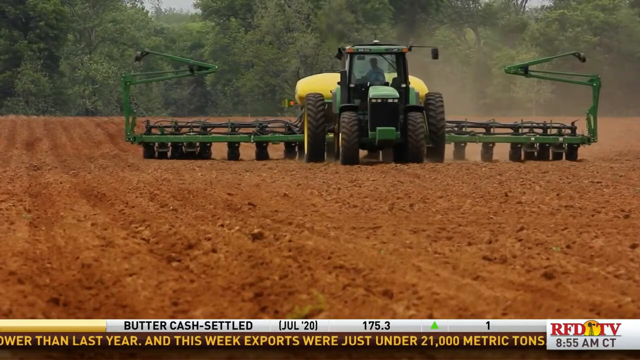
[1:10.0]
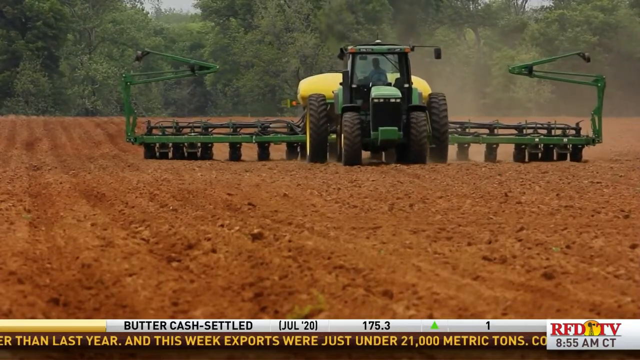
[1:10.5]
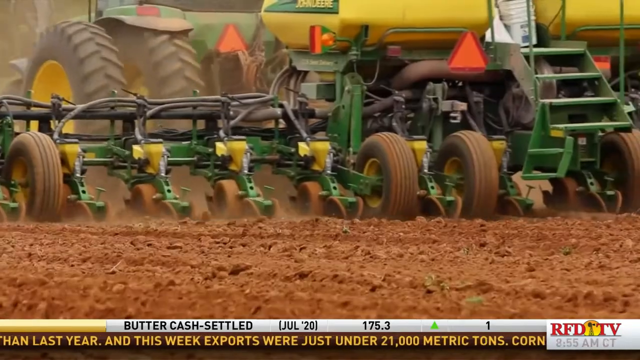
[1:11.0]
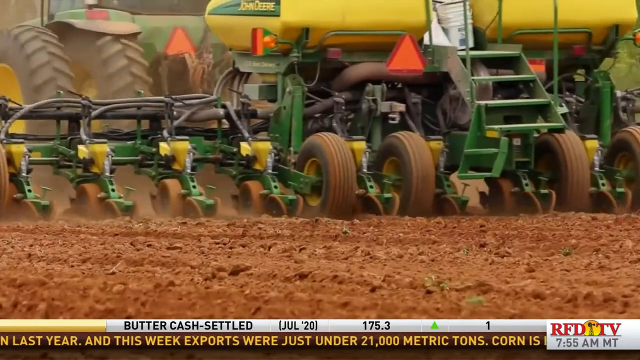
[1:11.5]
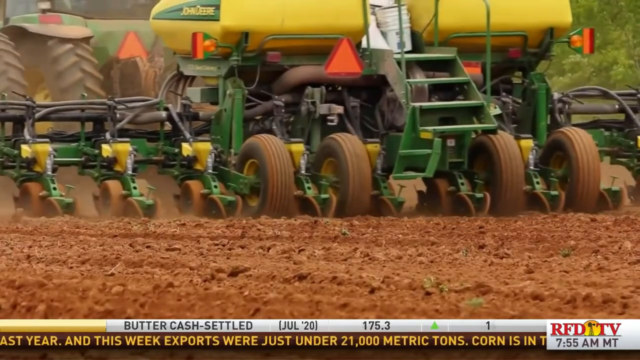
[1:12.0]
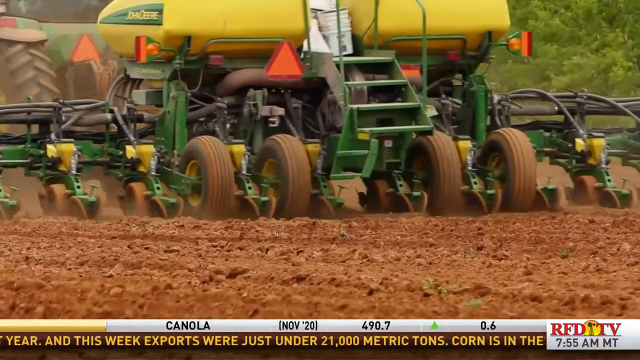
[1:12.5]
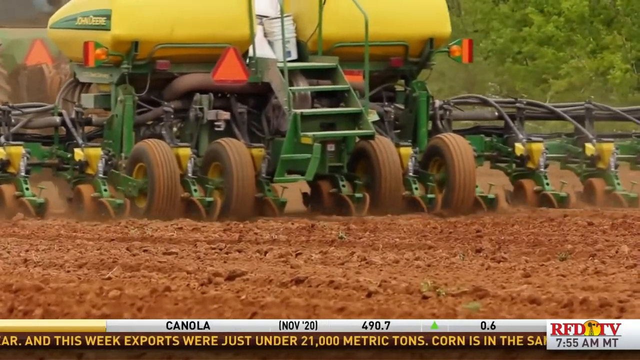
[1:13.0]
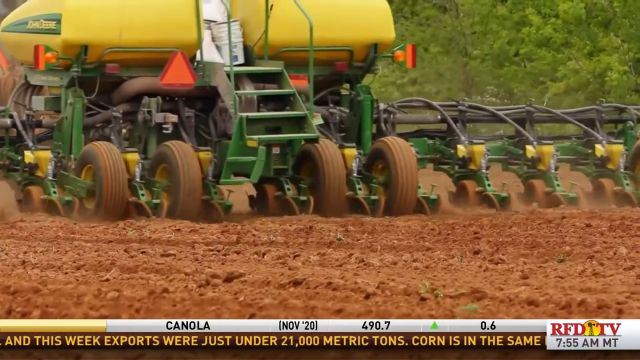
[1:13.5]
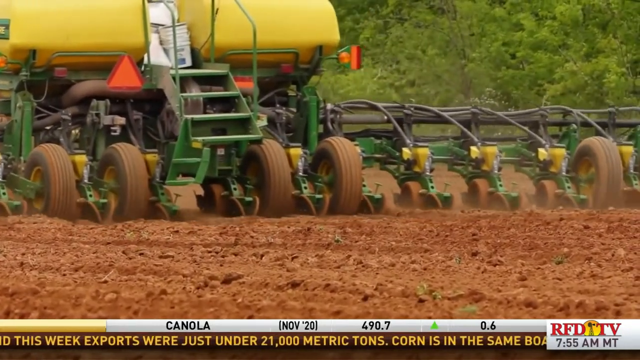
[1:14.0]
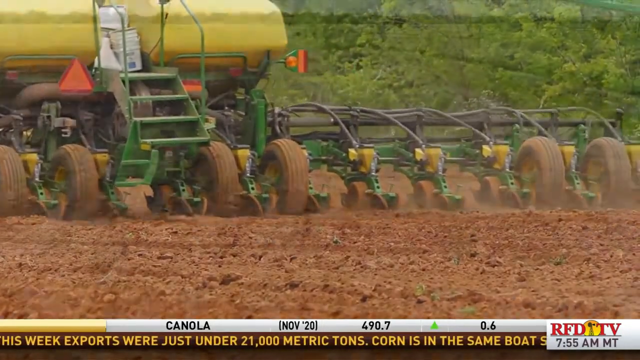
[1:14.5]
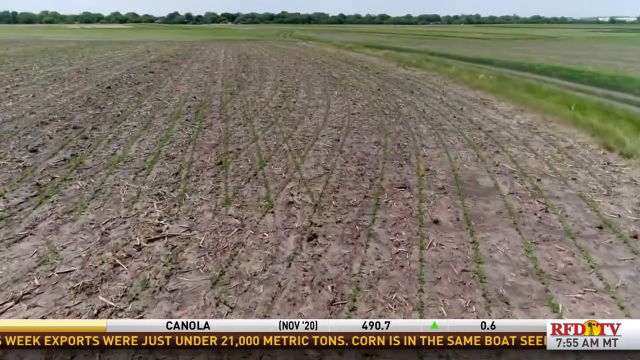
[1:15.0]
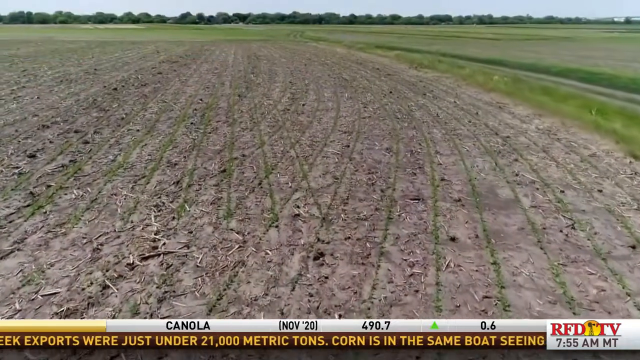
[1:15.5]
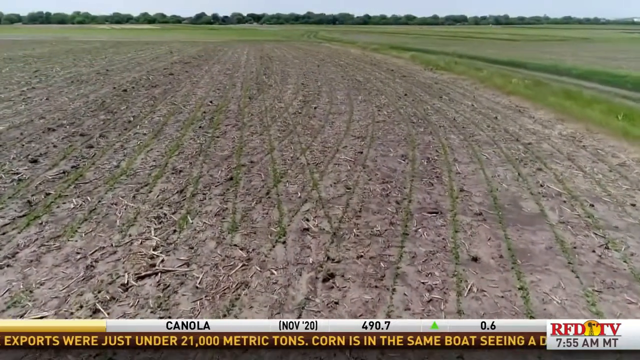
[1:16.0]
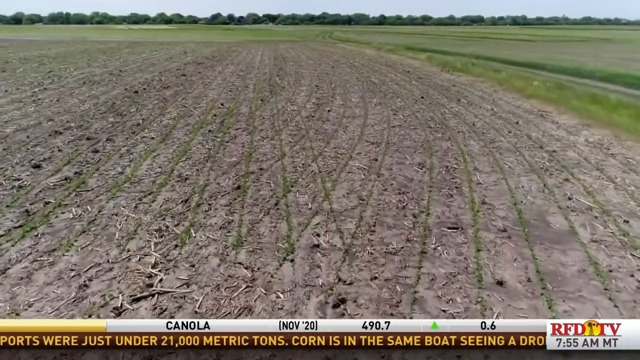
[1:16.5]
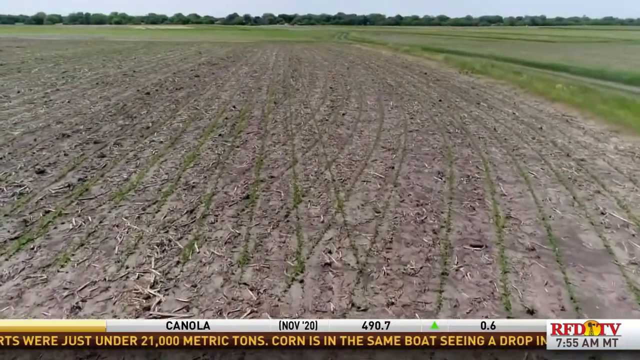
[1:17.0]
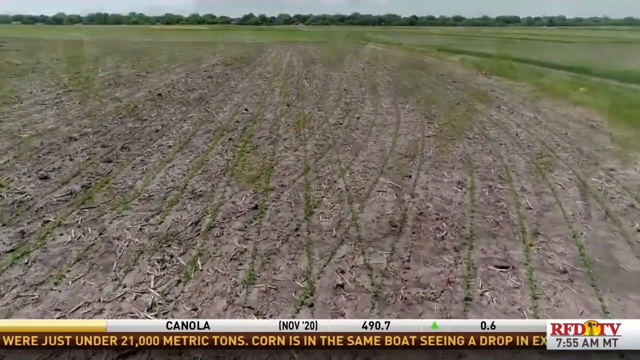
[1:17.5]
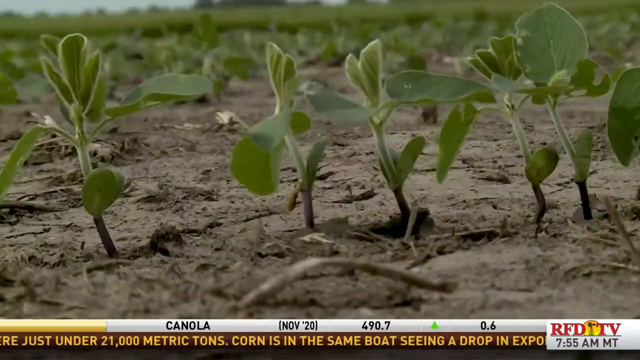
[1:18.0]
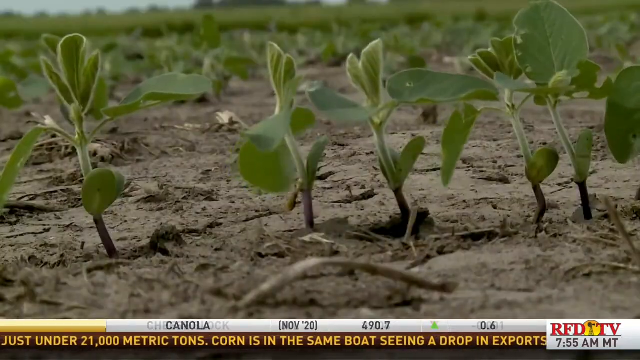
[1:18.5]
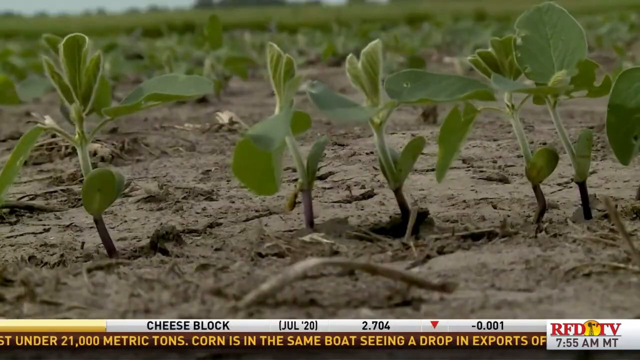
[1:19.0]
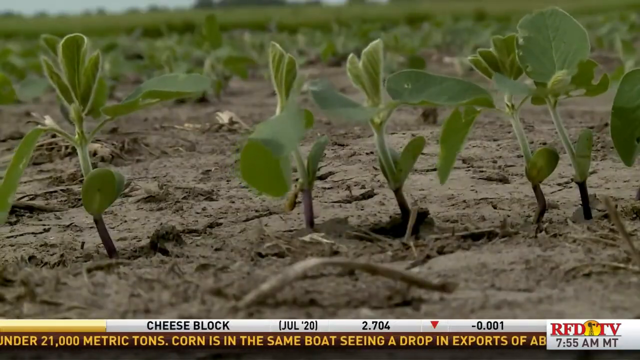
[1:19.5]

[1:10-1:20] The tractor is green and blue, with the operator inside. It has four tires, two at the front and two bigger ones at the back, and many forks behind it for planting. The field where crops are being planted shows tire tracks all around, and small green plants are already germinating. In the background are forest, trees and grasses.